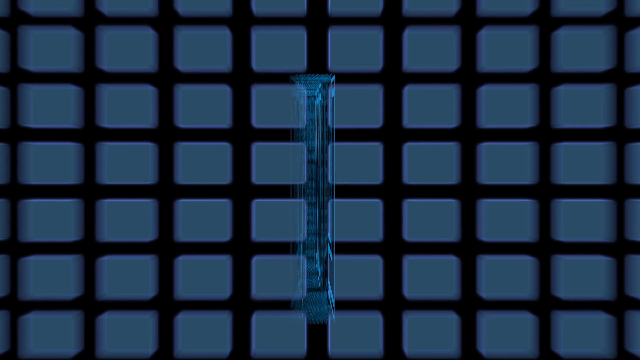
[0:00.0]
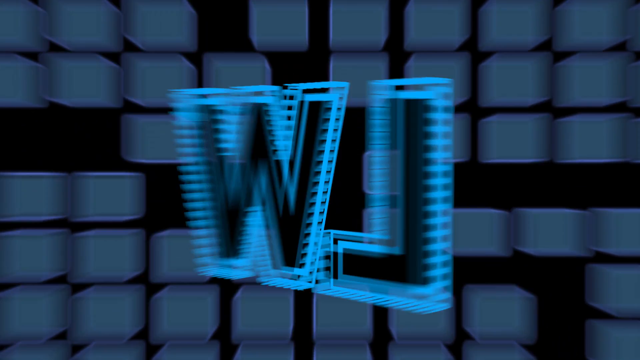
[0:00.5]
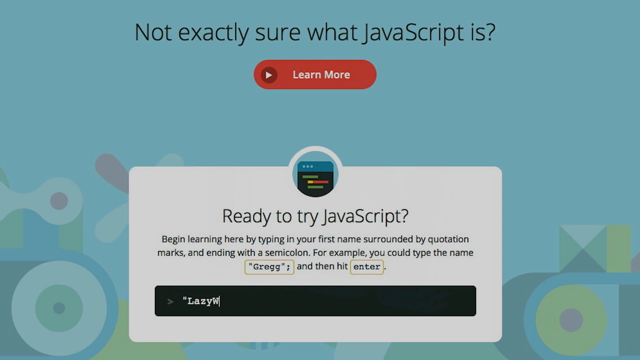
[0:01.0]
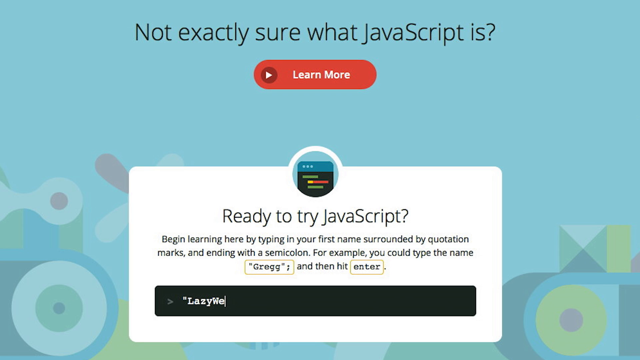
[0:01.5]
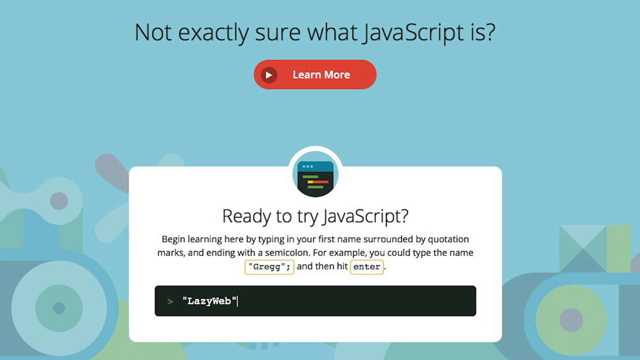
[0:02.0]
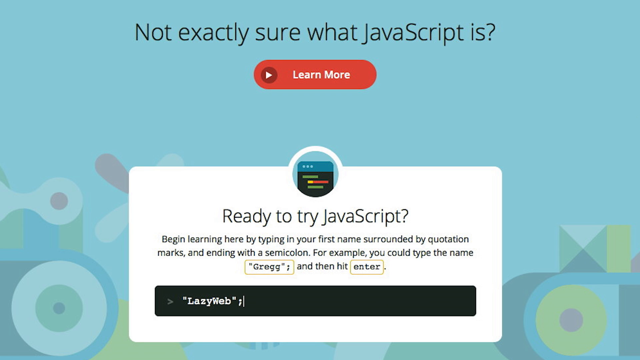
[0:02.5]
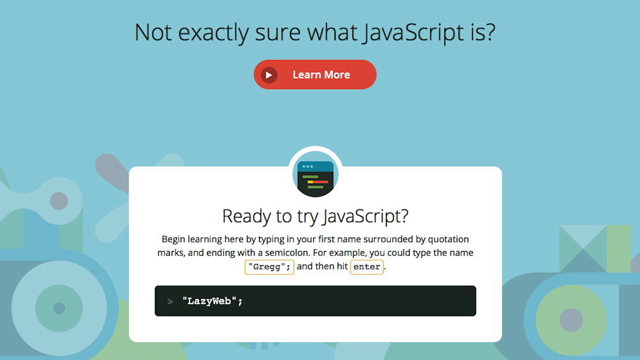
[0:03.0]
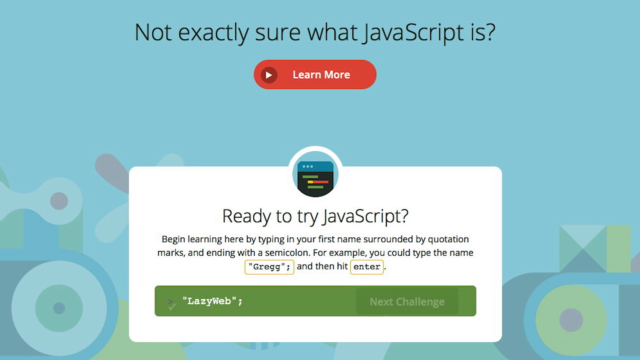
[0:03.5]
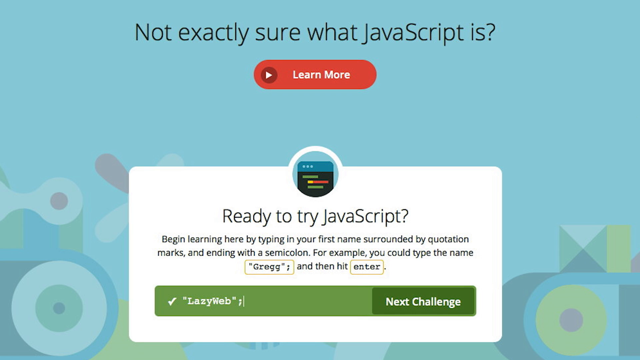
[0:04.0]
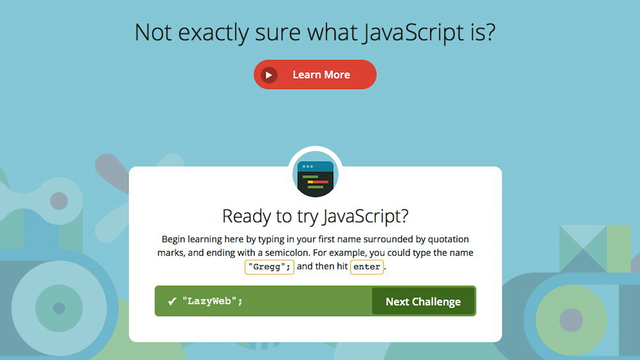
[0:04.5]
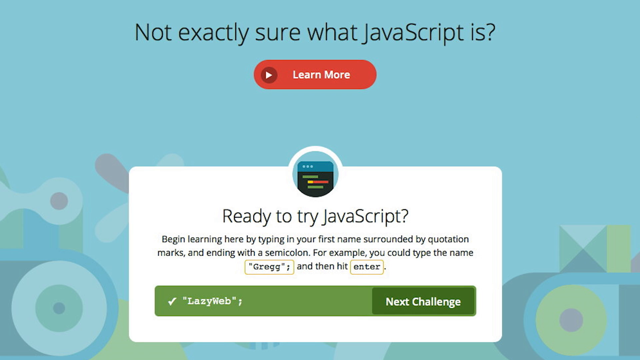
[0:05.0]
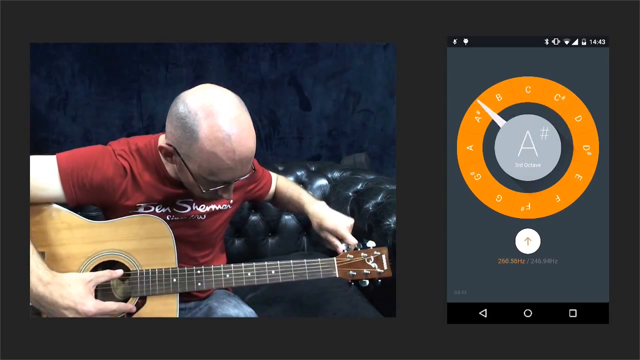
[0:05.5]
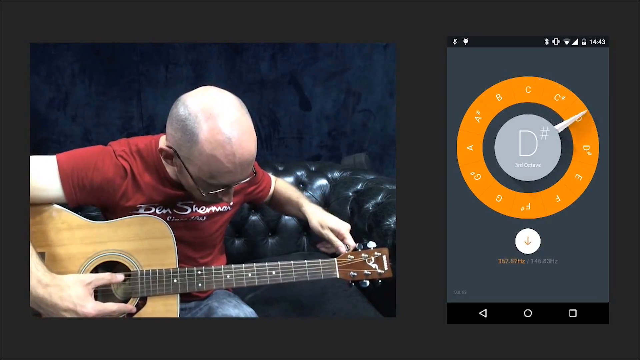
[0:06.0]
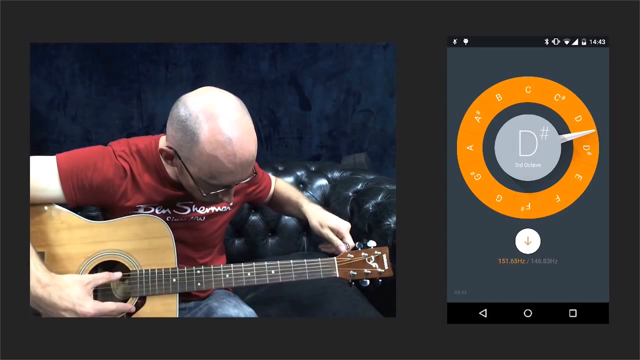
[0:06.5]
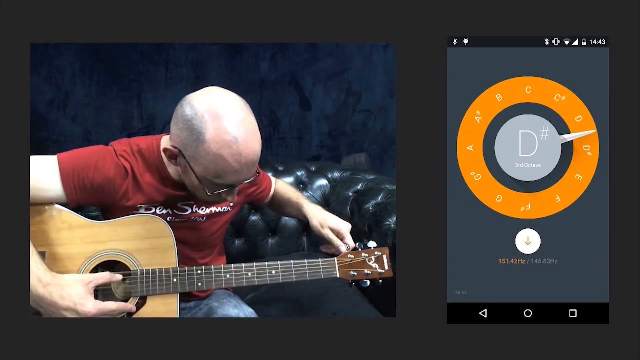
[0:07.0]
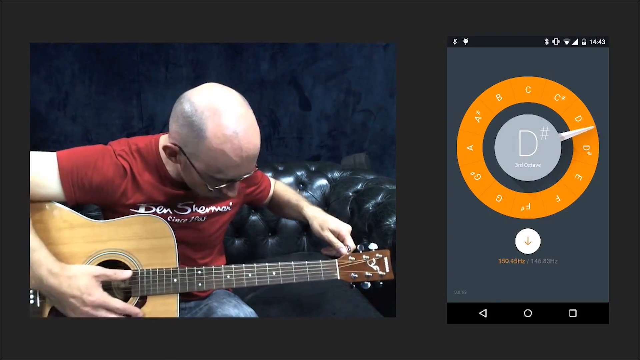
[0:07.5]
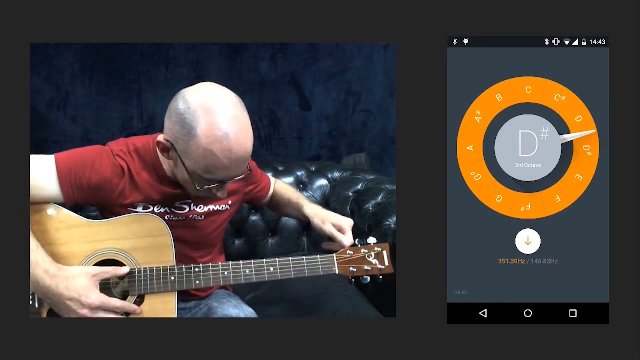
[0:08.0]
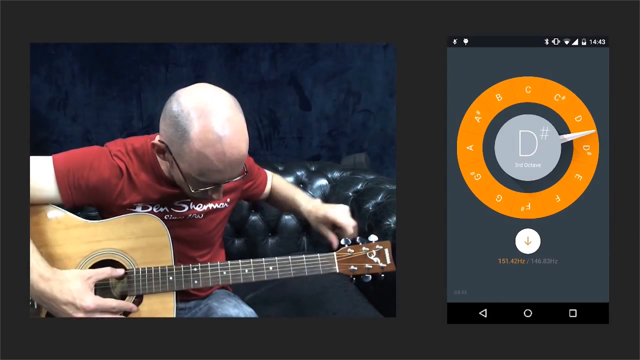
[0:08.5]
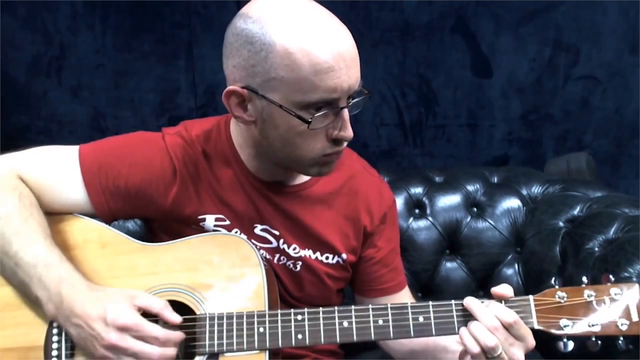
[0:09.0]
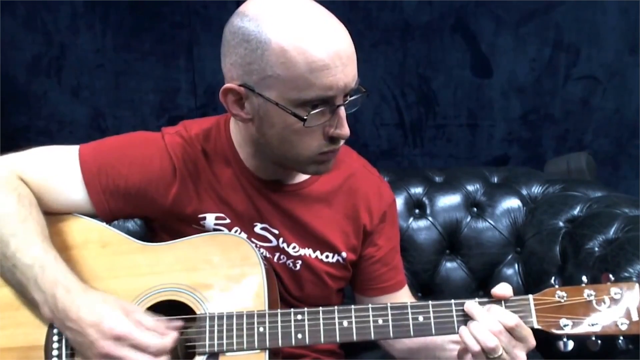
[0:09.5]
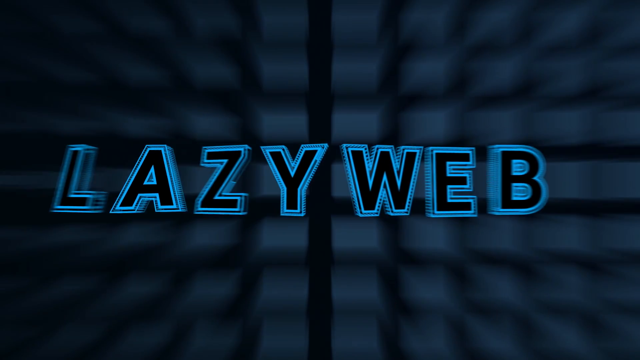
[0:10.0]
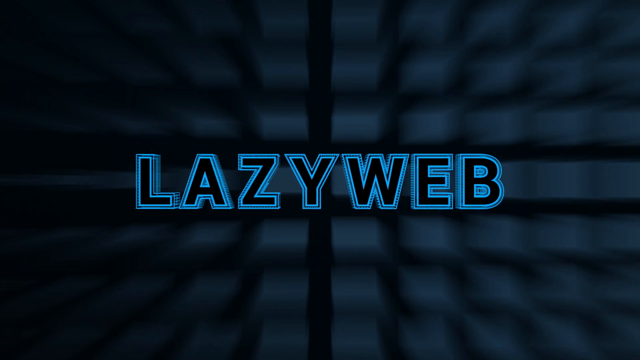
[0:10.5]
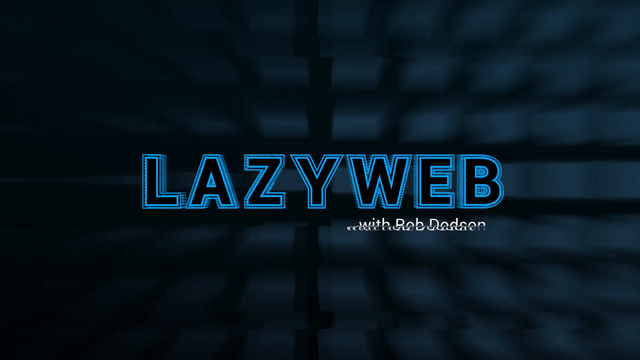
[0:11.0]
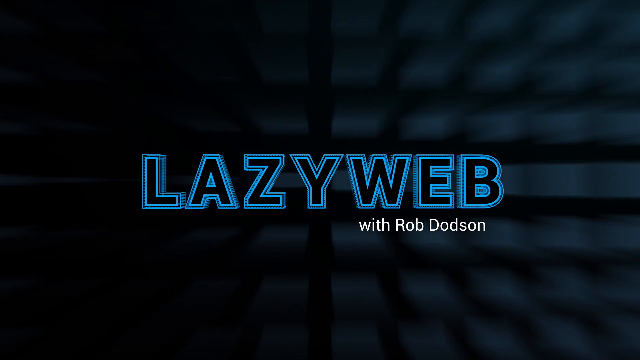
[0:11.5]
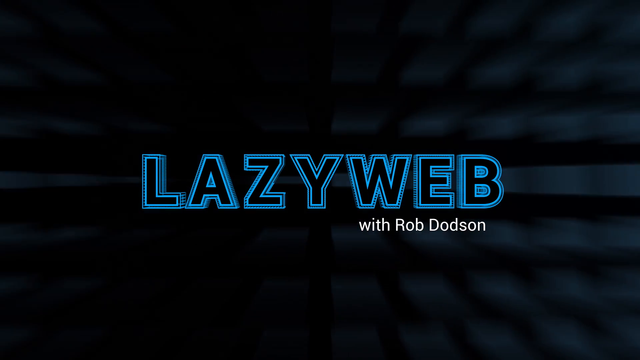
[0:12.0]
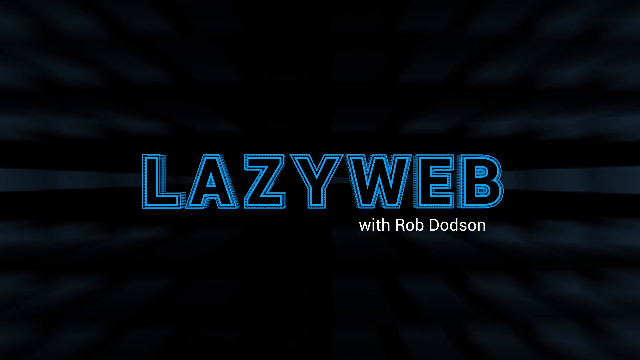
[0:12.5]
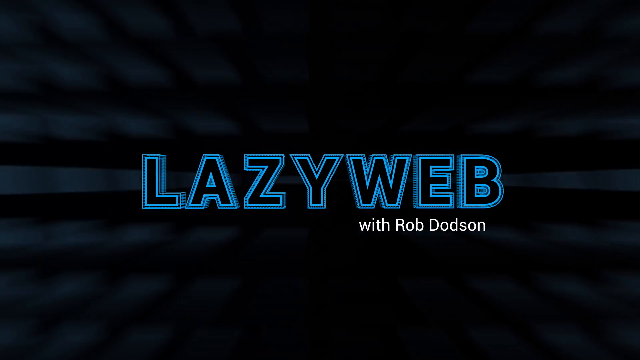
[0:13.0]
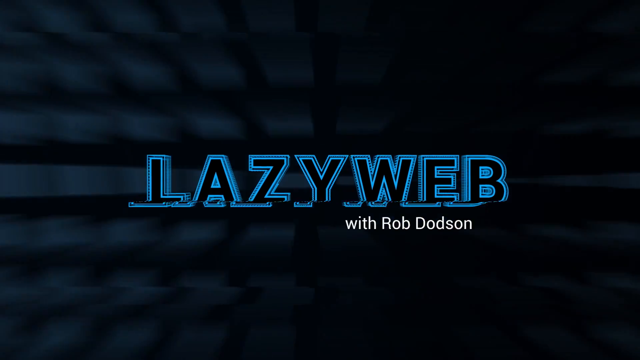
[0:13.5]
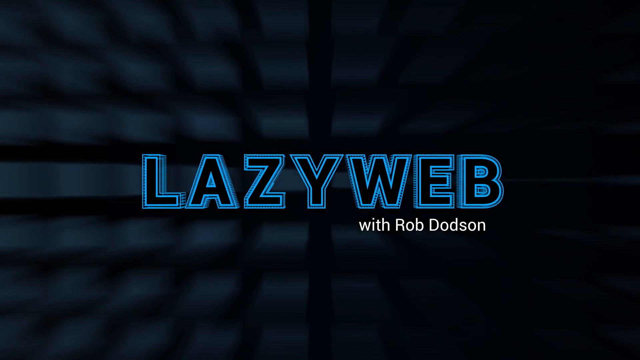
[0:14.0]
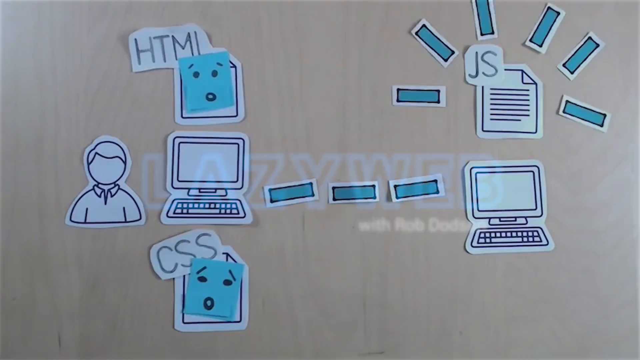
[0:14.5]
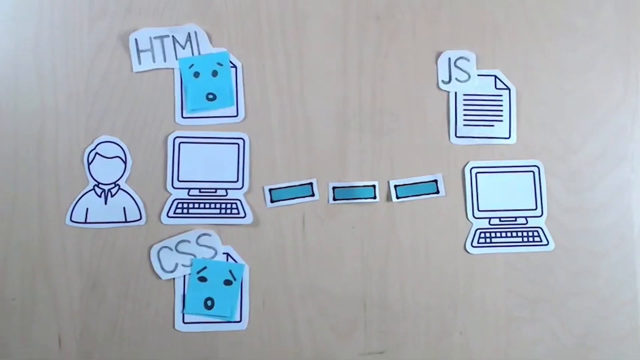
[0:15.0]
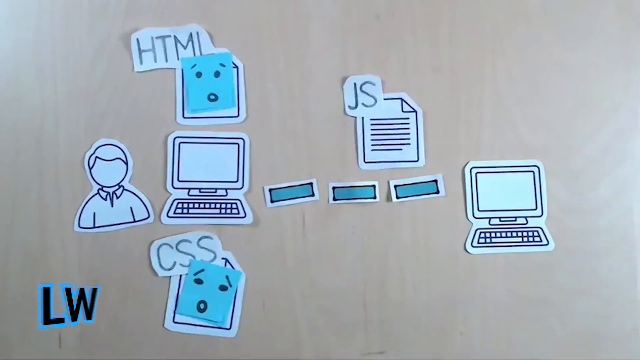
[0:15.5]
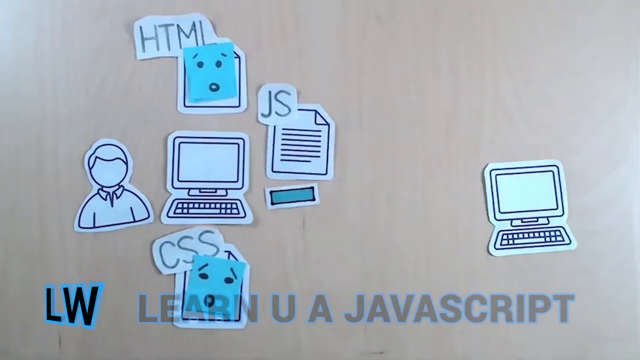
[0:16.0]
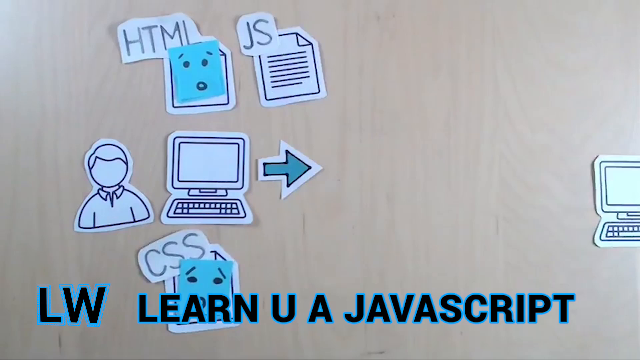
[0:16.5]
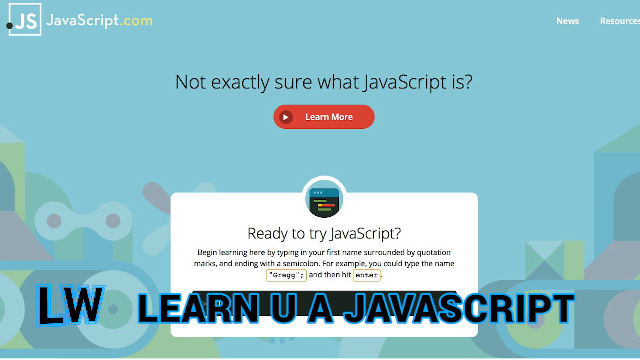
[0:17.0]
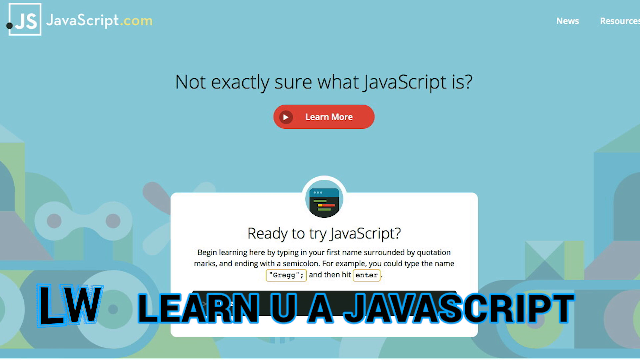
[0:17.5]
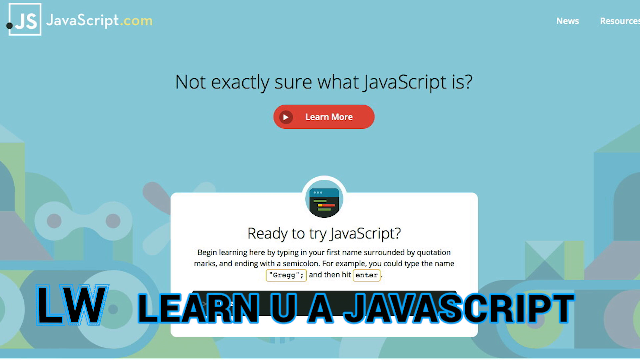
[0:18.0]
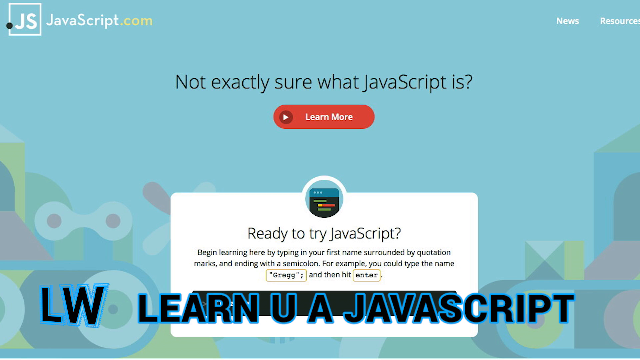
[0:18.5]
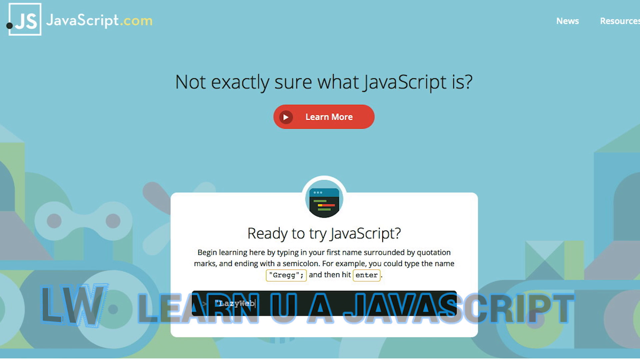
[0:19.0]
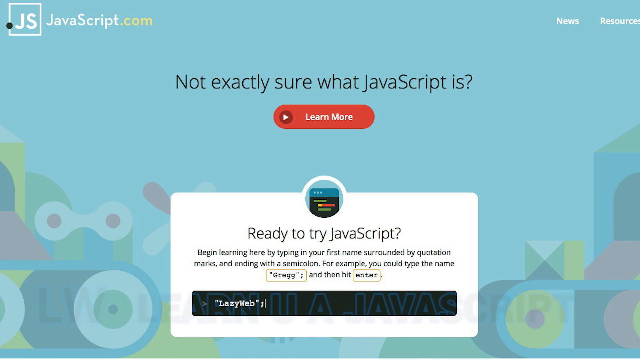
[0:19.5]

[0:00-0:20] The video opens on a black screen covered with symmetrical, evenly spaced blue squares with black borders around them. The letters "LW" in black with a blue border spin around the screen in a clockwise direction, and the squares and background disappear. The background becomes pale blue with some shapes at the bottom; at the top, black text reads "not exactly sure what javascript is", and below it red text reads "learn more". At the bottom is a white box that says "ready to try javascript begin learning here by typing in your first name surrounded by quotation marks and ending with a semi-colon for example if you could type the name greg and then hit enter". Below it is a black box, and the person types in "lazy web", which makes the box turn green. The next shot is a split screen: a man playing guitar on the left, and on the right a music chart showing the chords he is playing. Black text across the screen reads "lazy web by Rob Dodson", then disappears. A brown background screen follows, with illustrations of computers and people across it and the text "learn UA javascript".